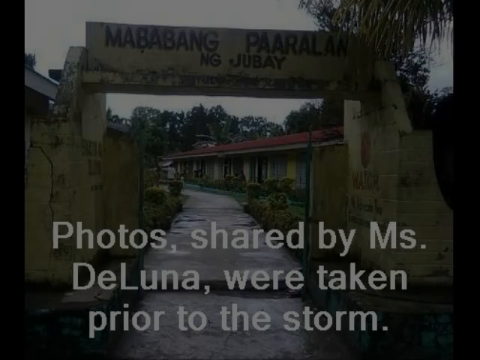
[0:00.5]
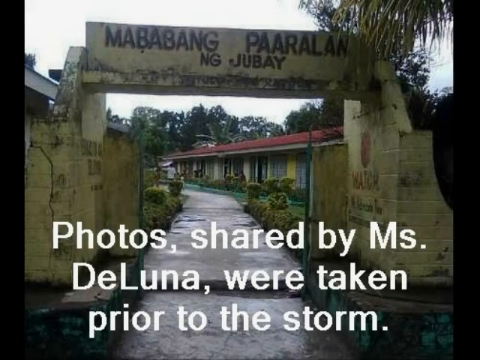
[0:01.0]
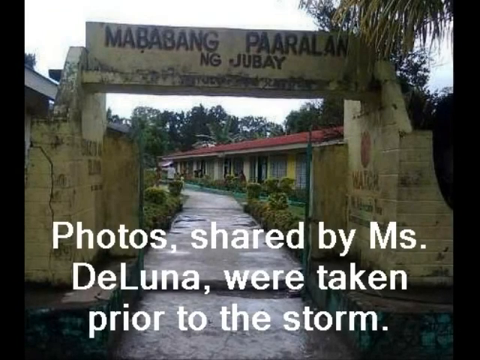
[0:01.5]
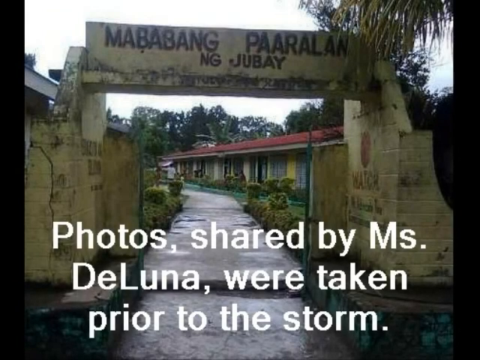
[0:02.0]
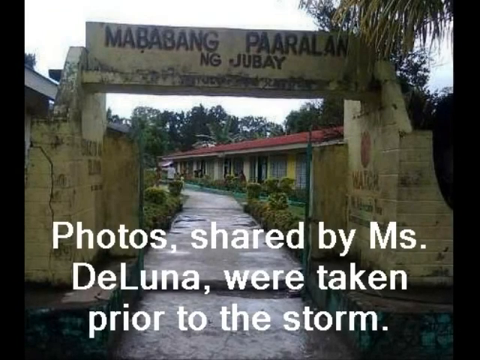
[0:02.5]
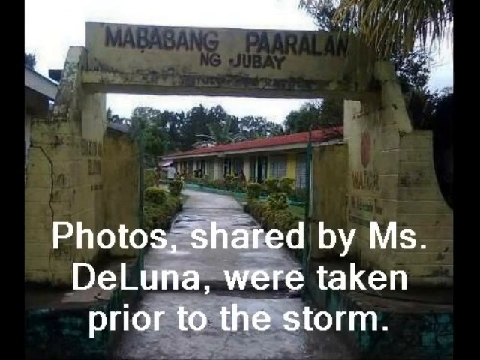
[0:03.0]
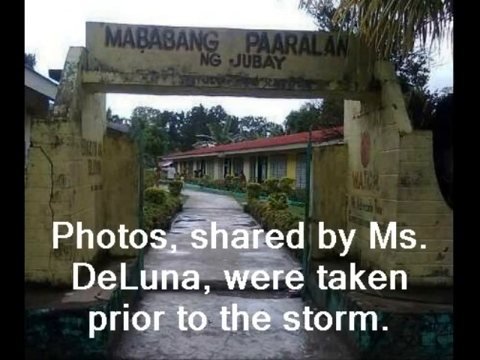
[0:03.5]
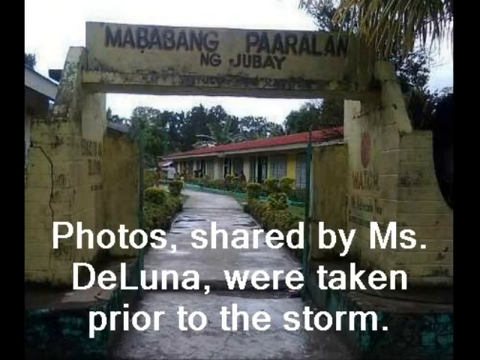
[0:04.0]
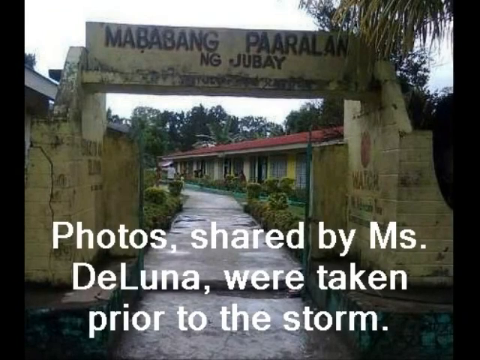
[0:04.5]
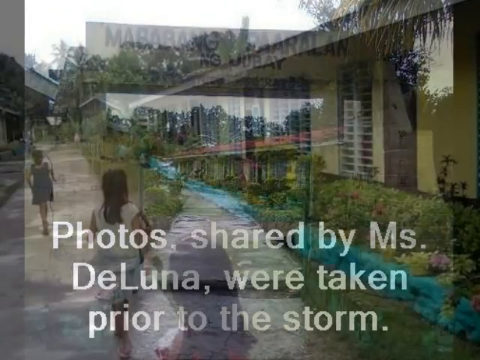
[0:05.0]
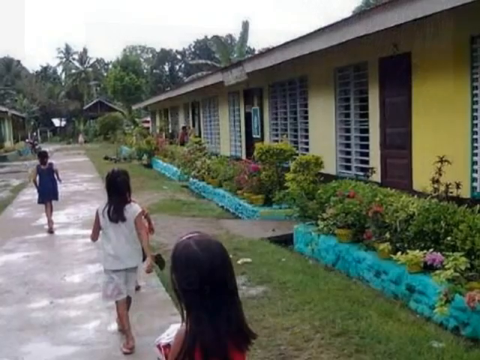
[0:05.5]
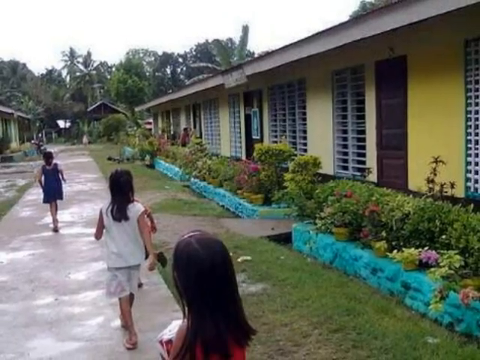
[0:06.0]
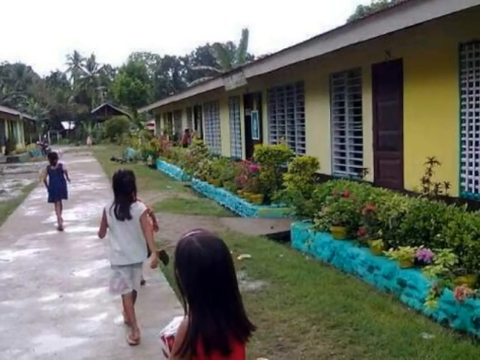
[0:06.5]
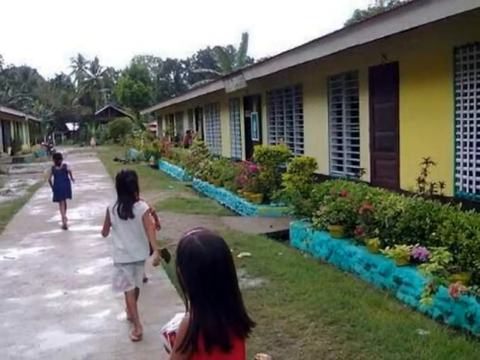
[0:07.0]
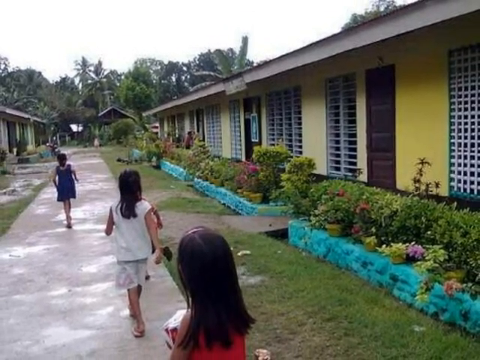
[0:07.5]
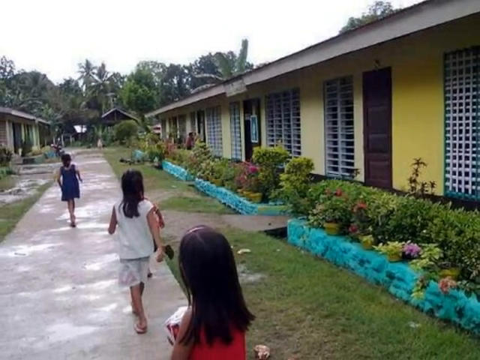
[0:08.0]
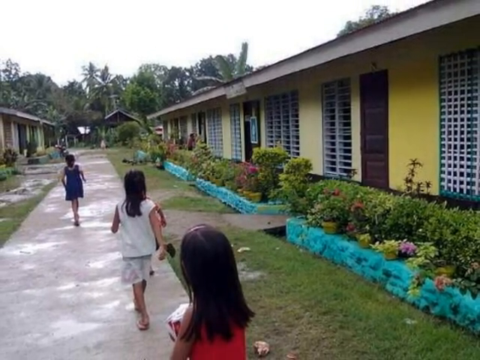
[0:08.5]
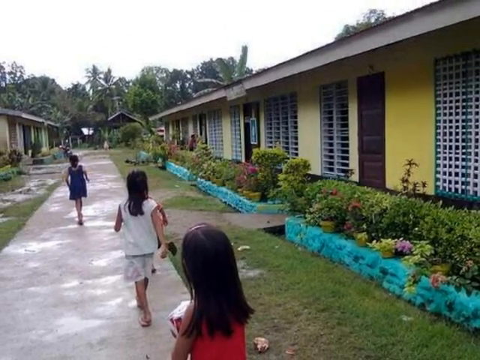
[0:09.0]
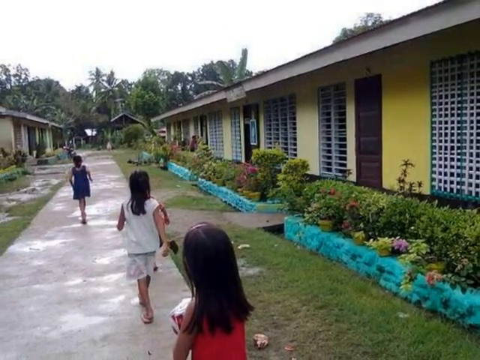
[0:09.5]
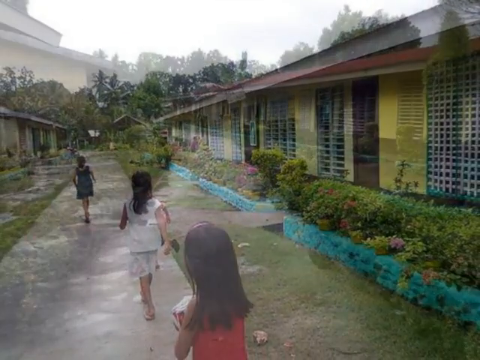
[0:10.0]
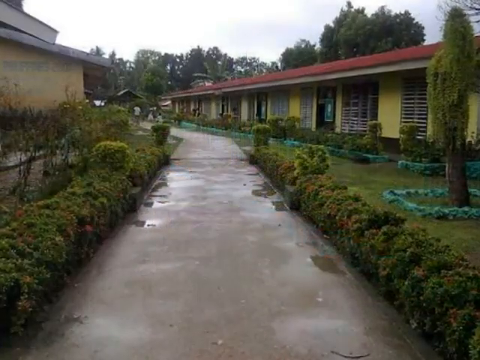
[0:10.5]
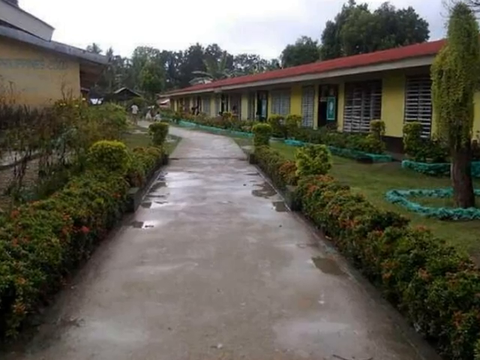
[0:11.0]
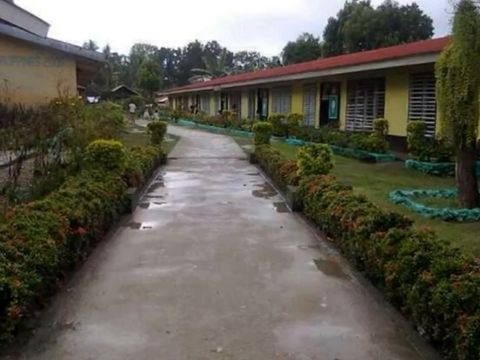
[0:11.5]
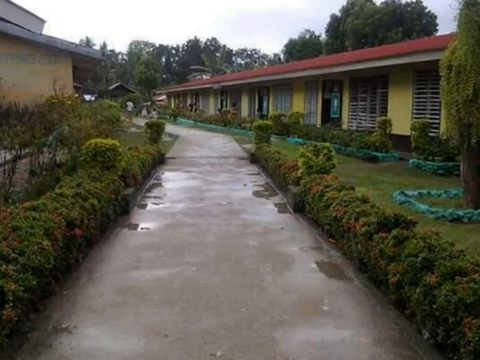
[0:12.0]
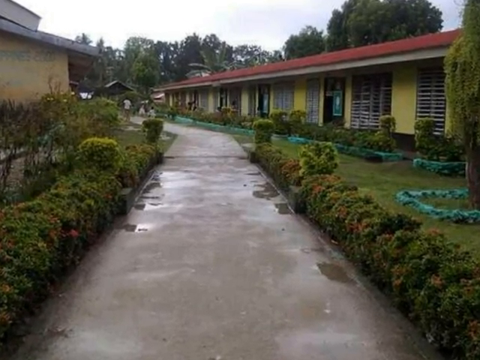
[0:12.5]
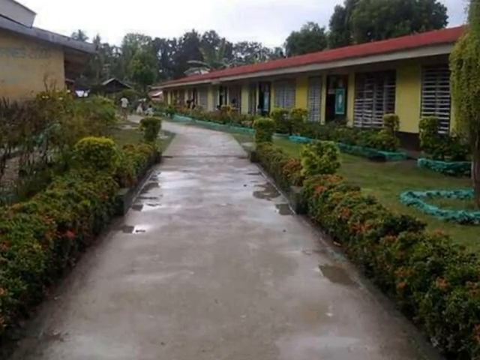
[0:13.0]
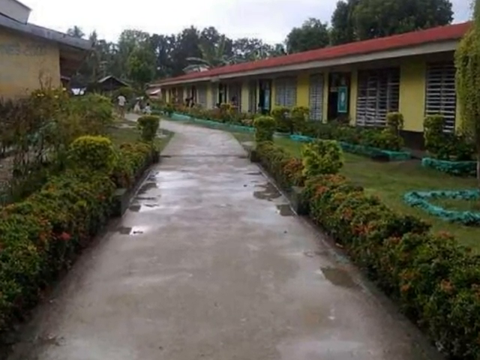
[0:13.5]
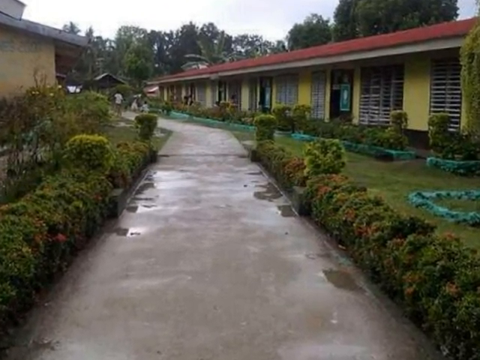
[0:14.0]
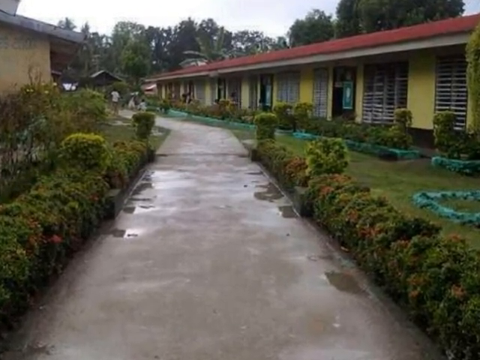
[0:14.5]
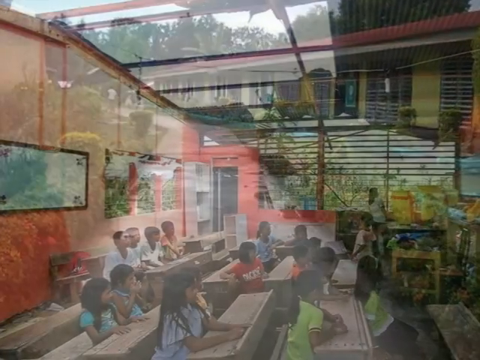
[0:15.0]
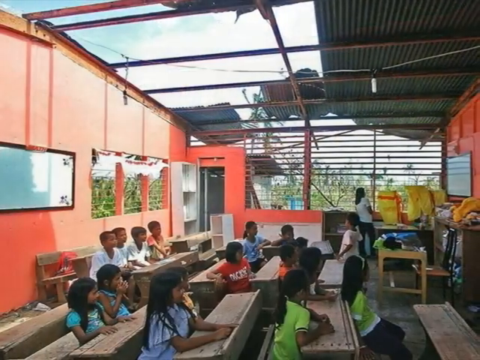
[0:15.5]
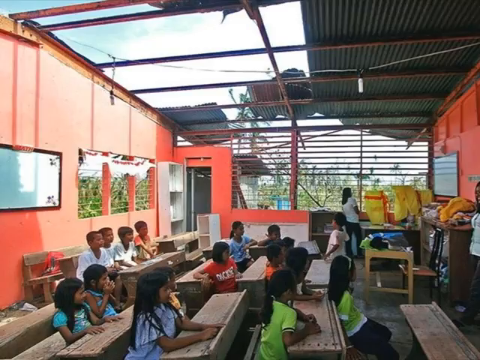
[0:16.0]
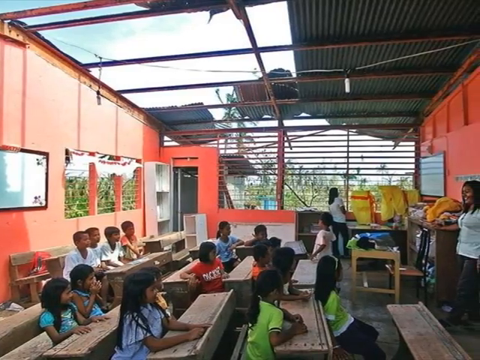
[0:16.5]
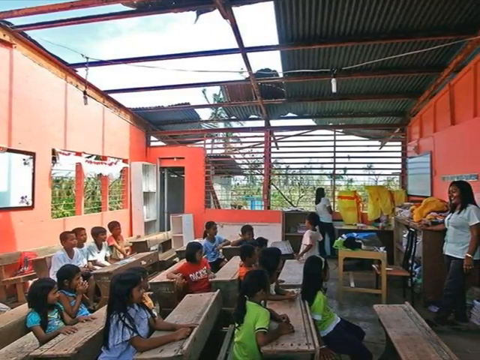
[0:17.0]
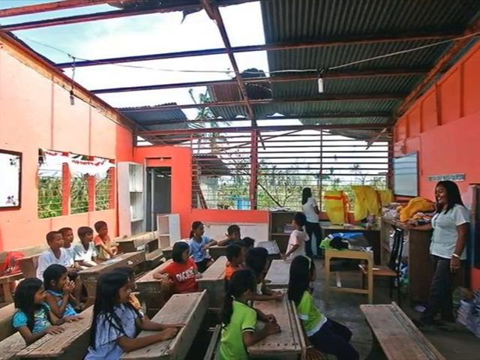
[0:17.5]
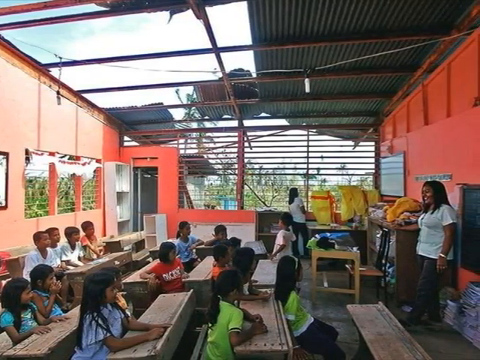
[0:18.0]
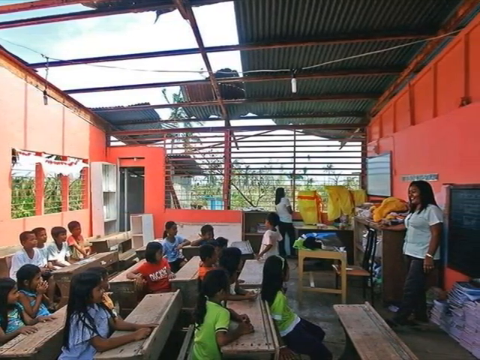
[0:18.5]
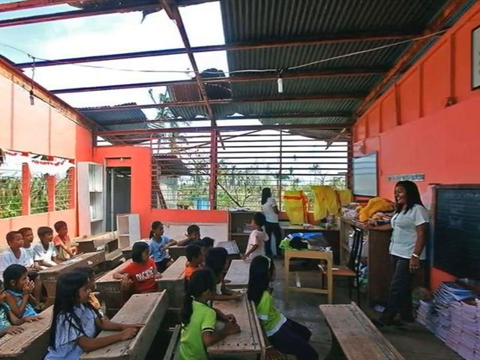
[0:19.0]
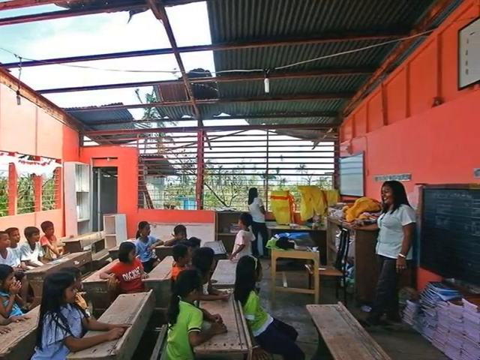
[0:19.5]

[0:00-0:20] The video shows the aftermath of a storm. It opens on the entrance to a building complex with the words "Mababong Paarala Ng Jubay." An overlay of text reads "photos shared by Ms. De Luna were taken prior to the storm." The complex includes a yellow building with a low roof and garden beds in front filled with flowers and lined with painted blue stones. Children walk on a sidewalk next to the building, with tall tropical plants in the background, and the buildings and sidewalks are lined with shrubs. The video then transitions to the inside of a classroom whose roof is damaged and whose siding is missing. There are a dozen children in the room with two teachers. One teacher is standing at the front of the class in front of a television screen while the students are all seated at the desks. The other teacher is at the siding, looking out through the siding of the wall. Bookcases, shelves and large yellow bags are visible in the classroom.